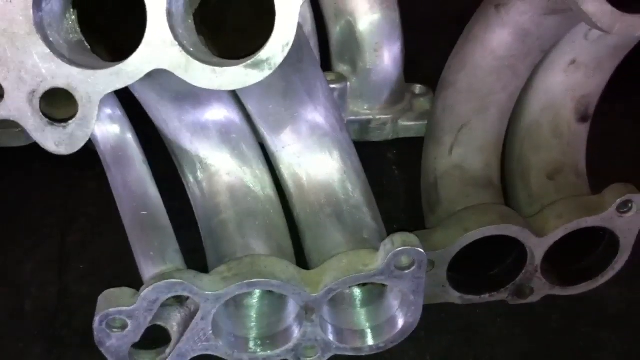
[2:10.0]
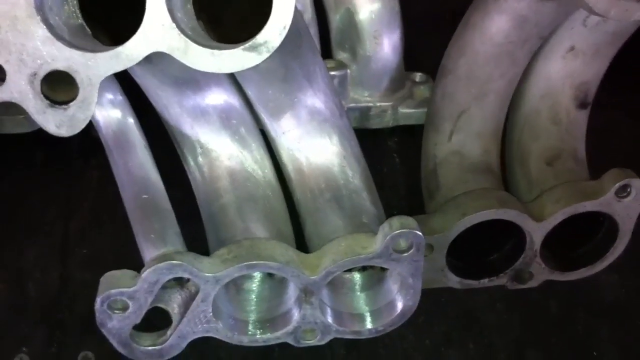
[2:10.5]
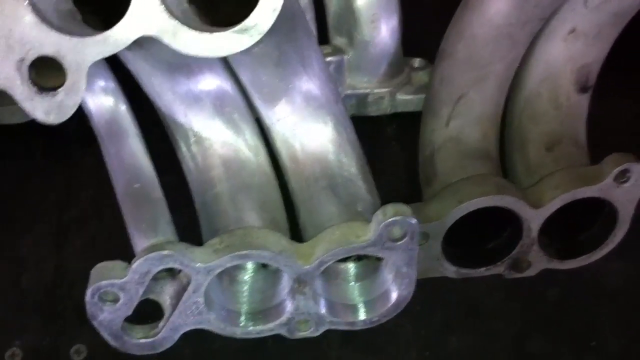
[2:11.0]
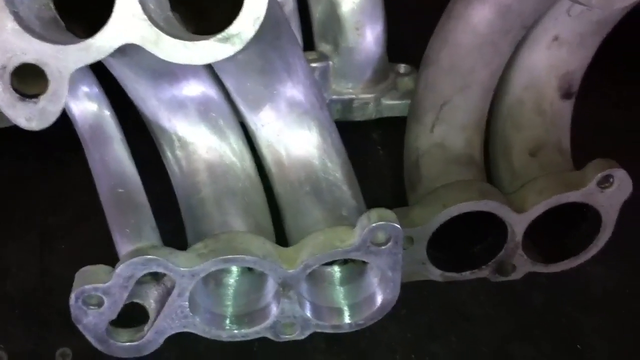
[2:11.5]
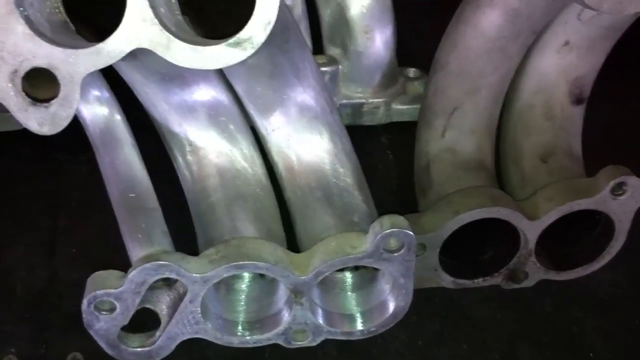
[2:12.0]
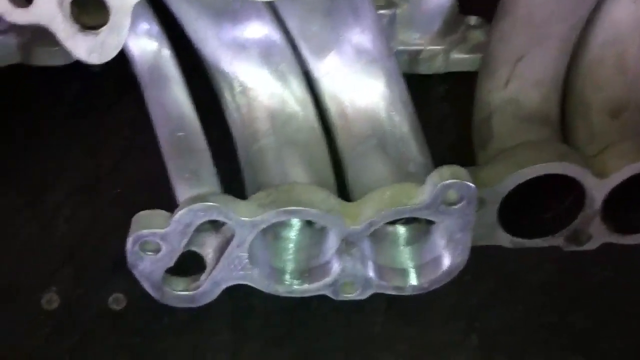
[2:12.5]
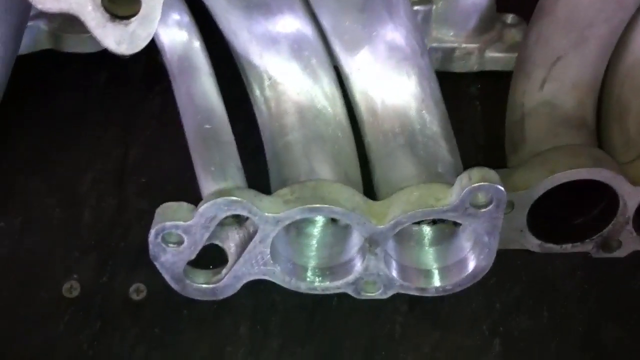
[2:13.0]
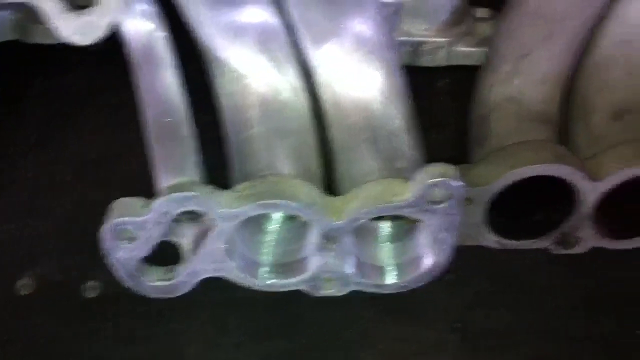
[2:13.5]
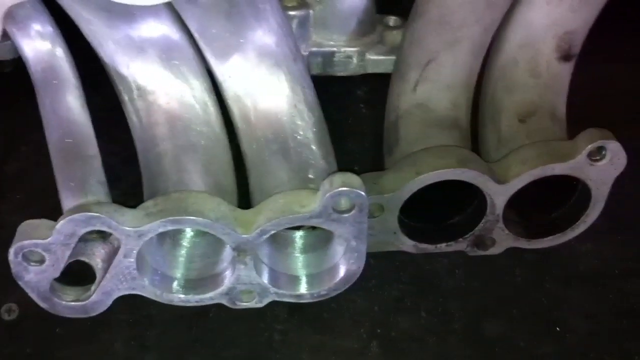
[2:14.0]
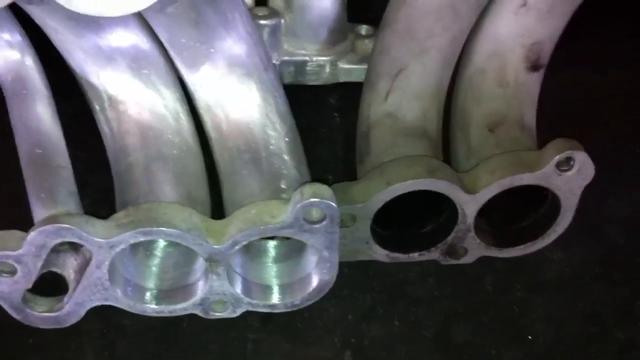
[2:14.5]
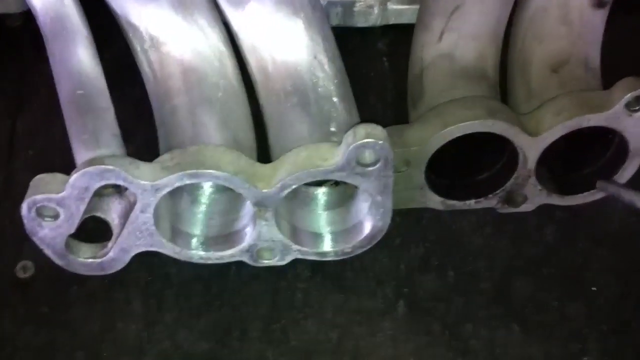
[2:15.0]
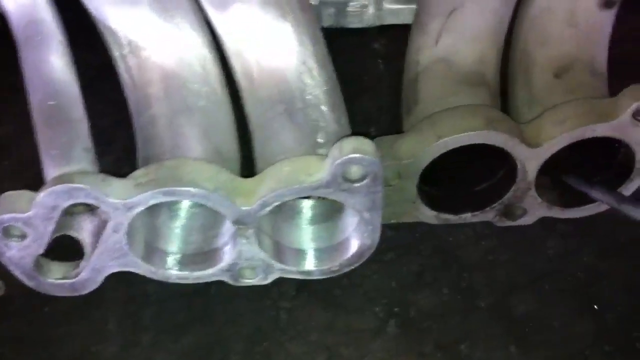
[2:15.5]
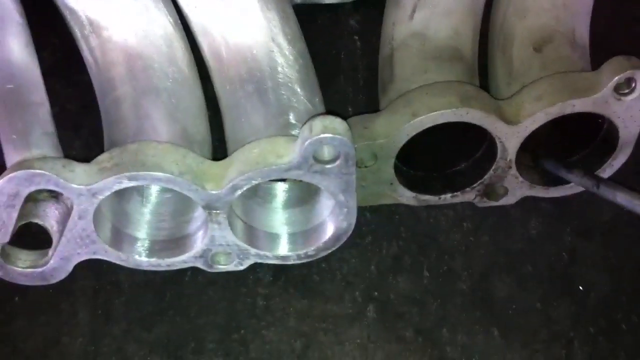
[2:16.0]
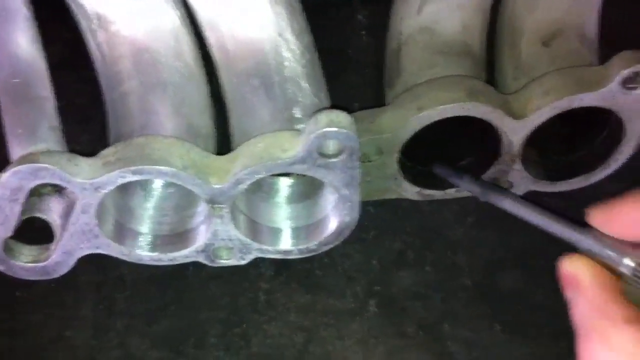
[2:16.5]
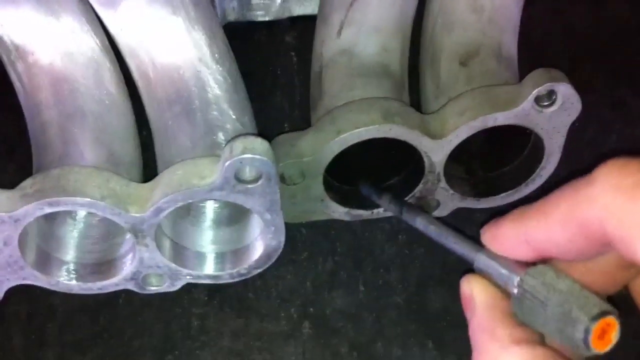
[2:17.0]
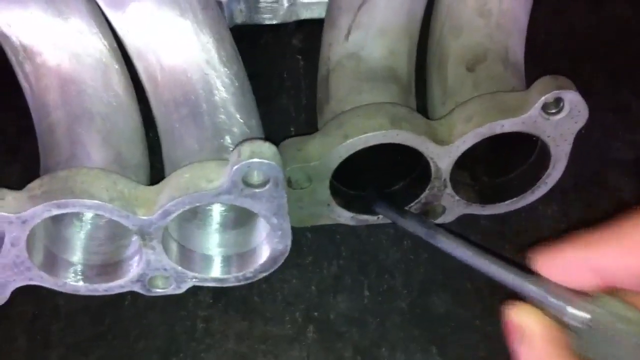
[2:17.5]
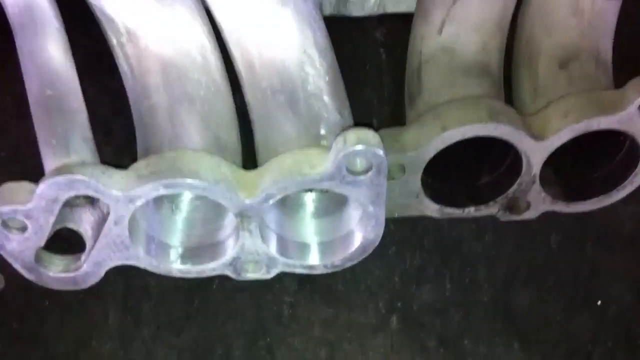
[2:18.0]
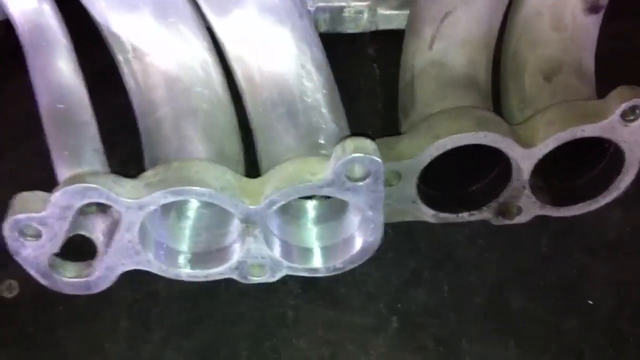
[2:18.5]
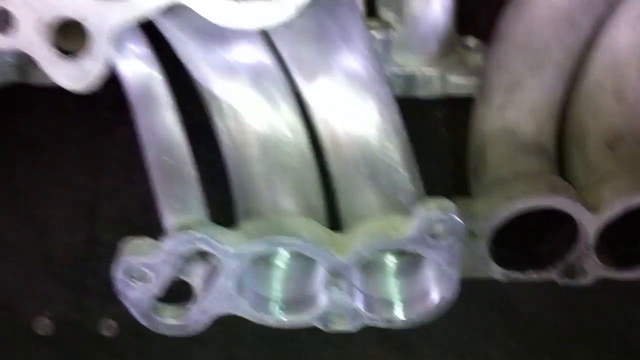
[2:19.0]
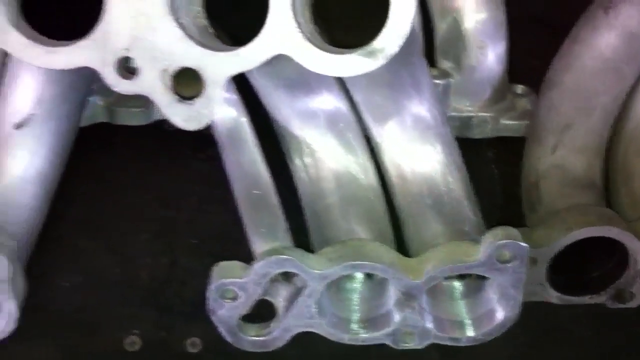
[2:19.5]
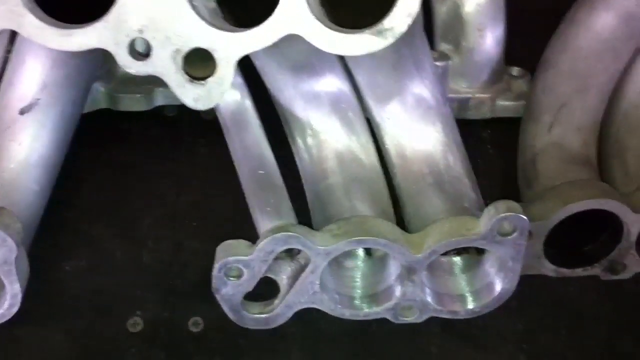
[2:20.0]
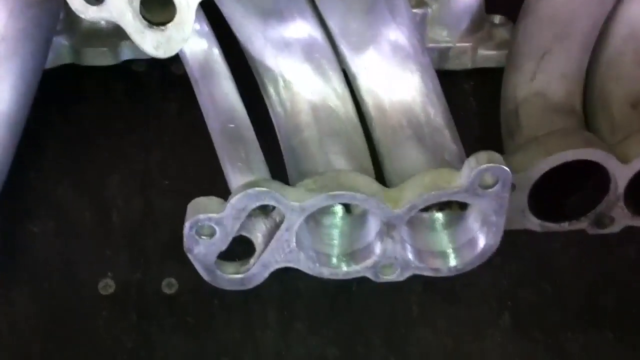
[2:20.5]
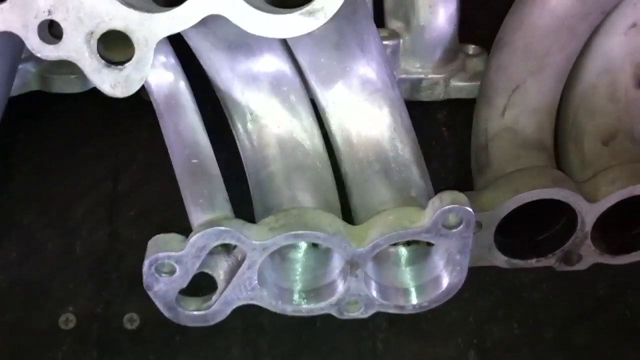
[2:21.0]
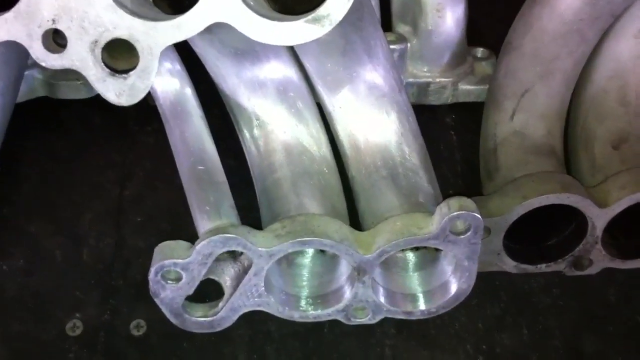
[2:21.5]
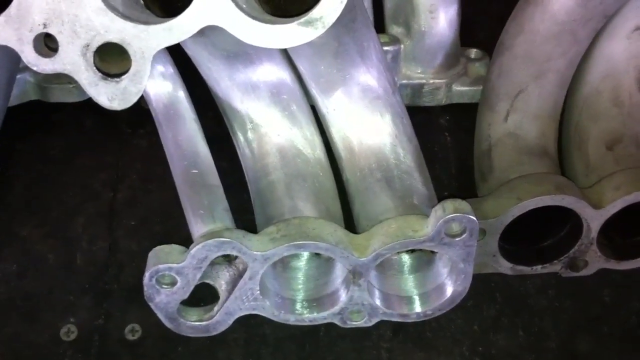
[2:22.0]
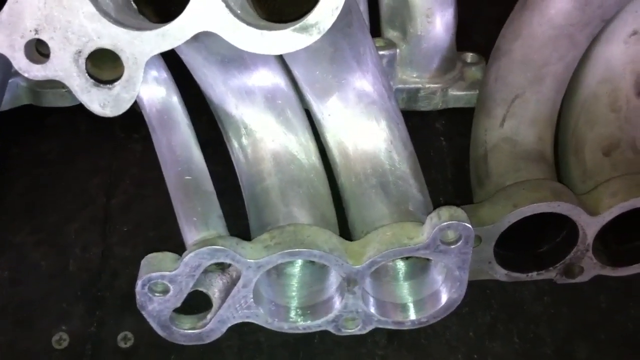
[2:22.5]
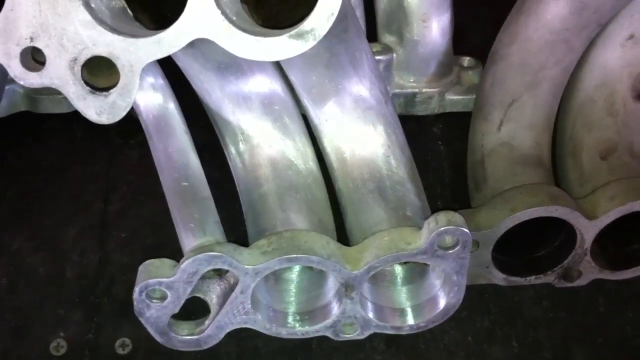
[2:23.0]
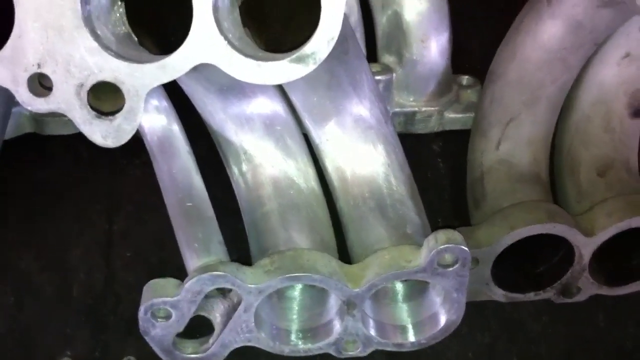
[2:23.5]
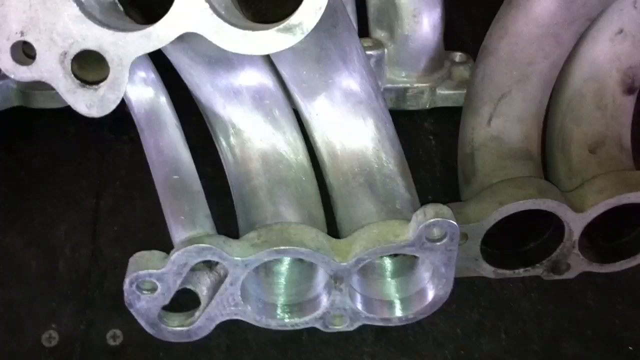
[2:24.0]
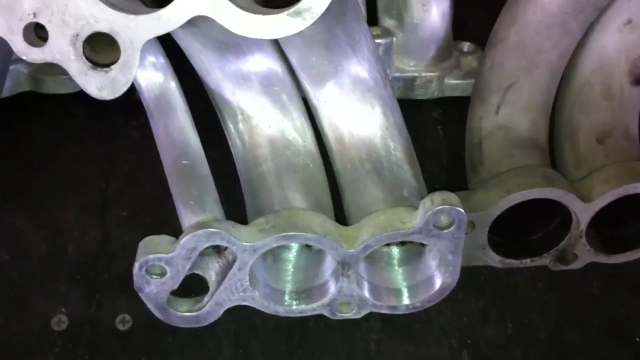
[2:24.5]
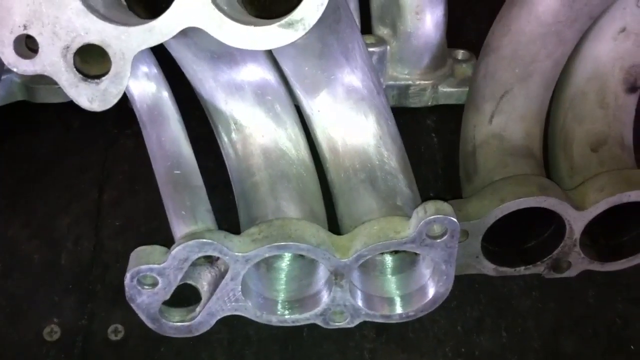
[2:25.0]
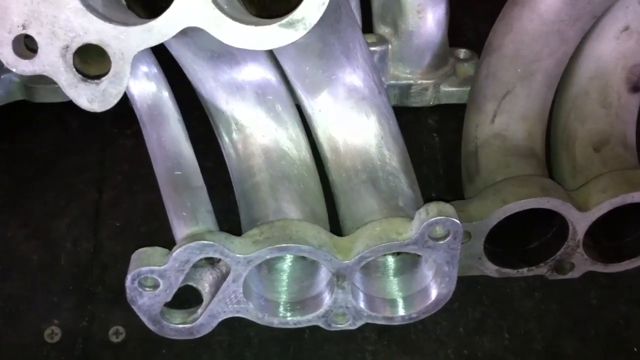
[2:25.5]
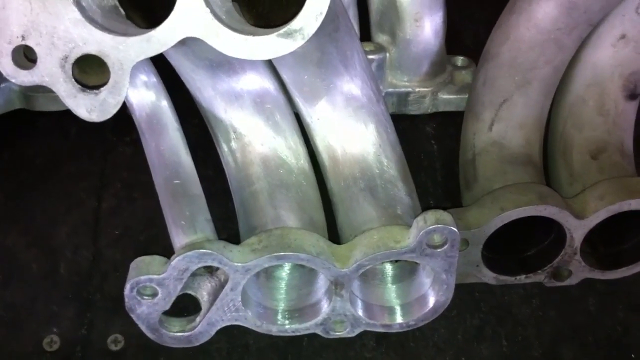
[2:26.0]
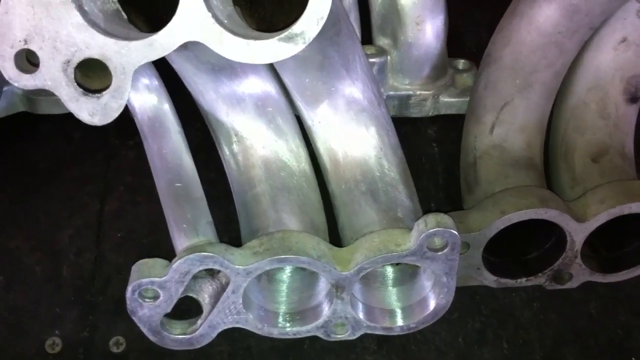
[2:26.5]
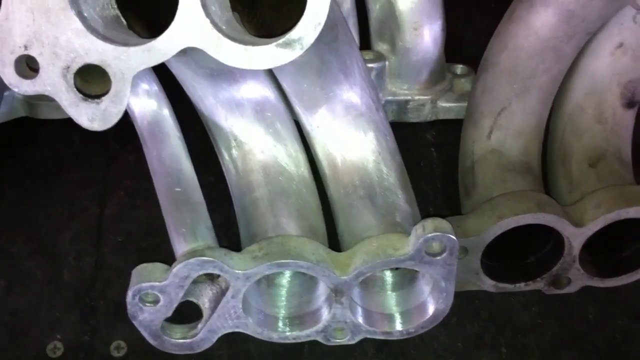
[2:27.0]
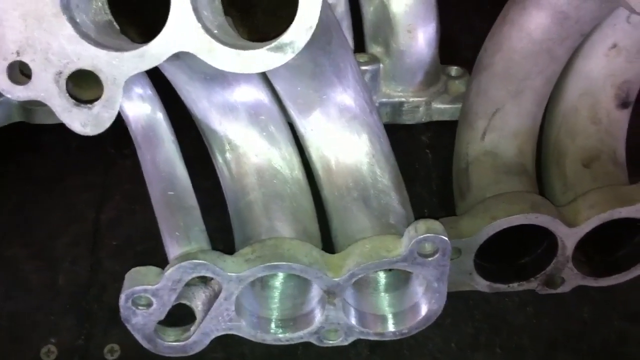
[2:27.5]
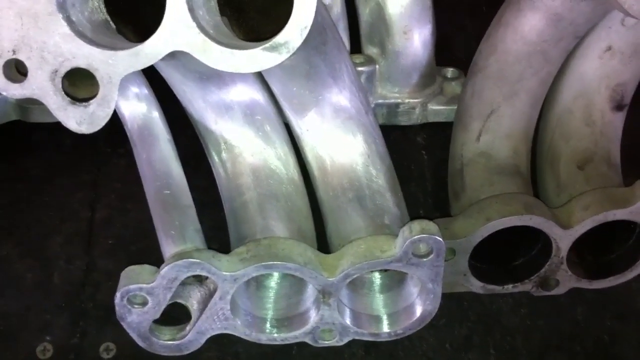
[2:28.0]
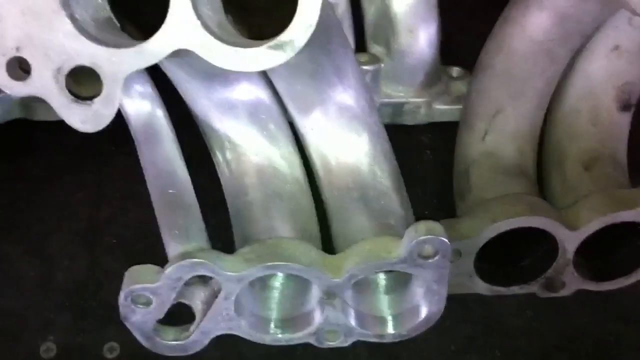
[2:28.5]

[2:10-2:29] Pipes are shown; the ones on the left look very shiny, almost brand new. A person with a metal rod first pokes it into the older pipes that have not been redone. These have black marks on the outside, and the inside of their holes is very dark. The metal pipes on the left side have been redone; they are very shiny on the outside, and inside the holes are very clean. The holes are attached by a plate with four holes, and the other side attaches to another plate. The pipes are laying on a black surface, all pushed together. The holes and pipes on the right are untouched and look very used and very dirty, while the other pipes are very clean, either cleaned up or redone.